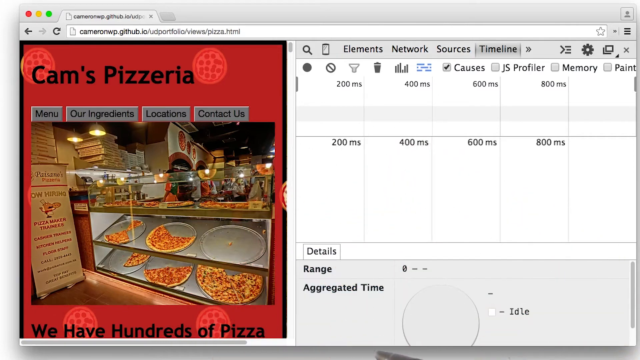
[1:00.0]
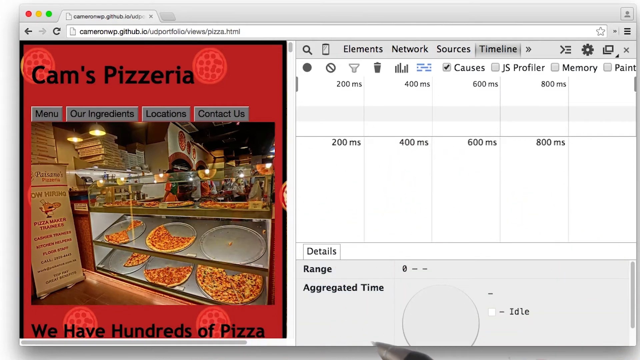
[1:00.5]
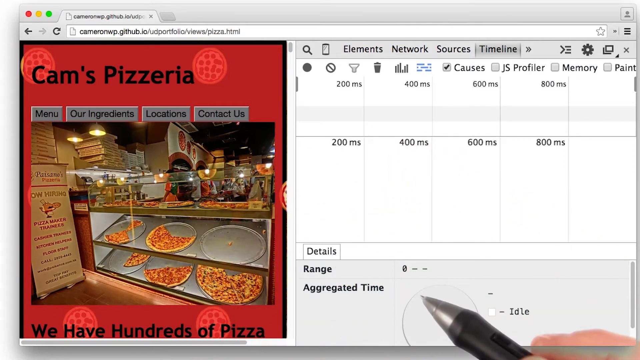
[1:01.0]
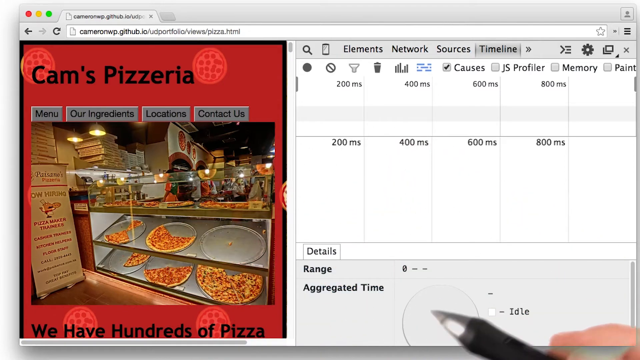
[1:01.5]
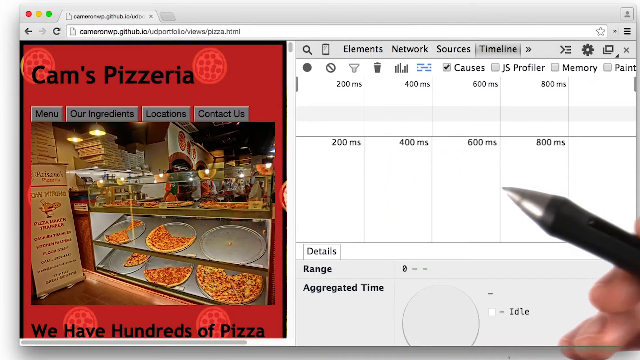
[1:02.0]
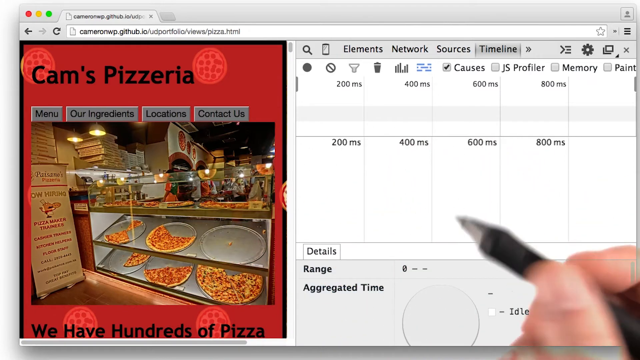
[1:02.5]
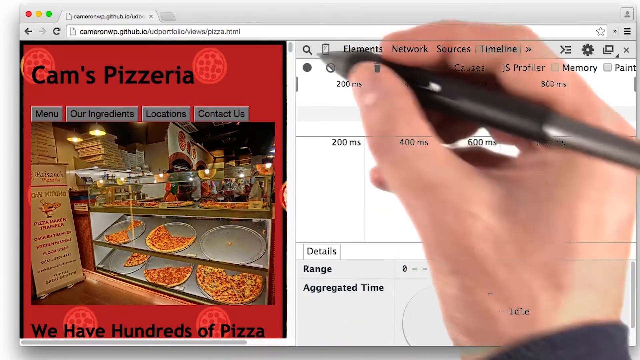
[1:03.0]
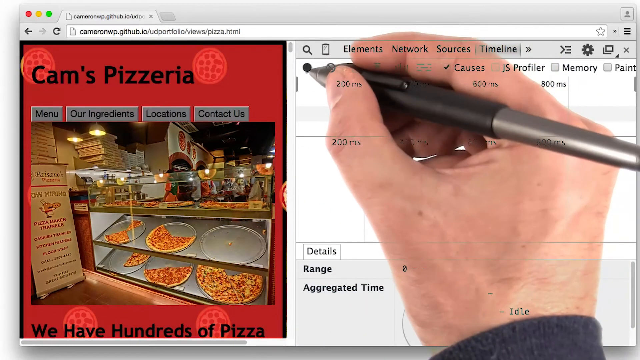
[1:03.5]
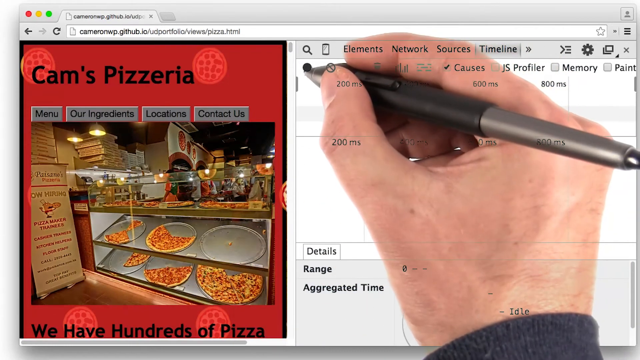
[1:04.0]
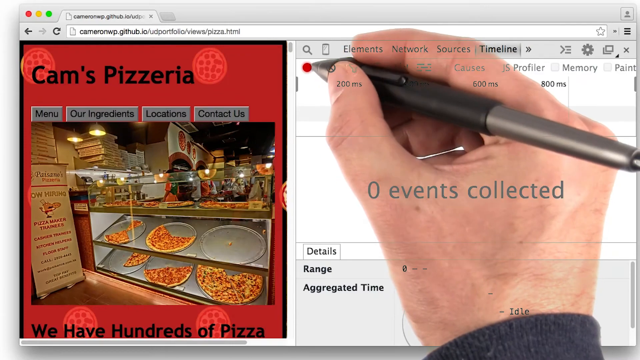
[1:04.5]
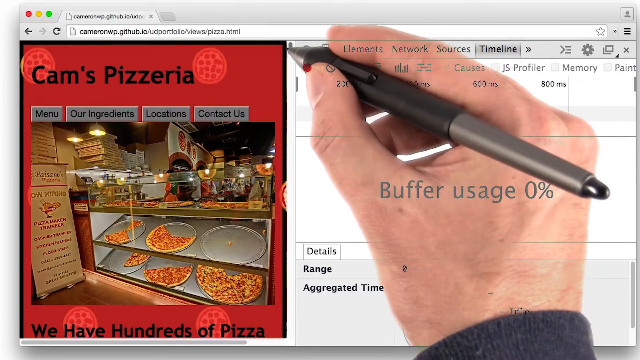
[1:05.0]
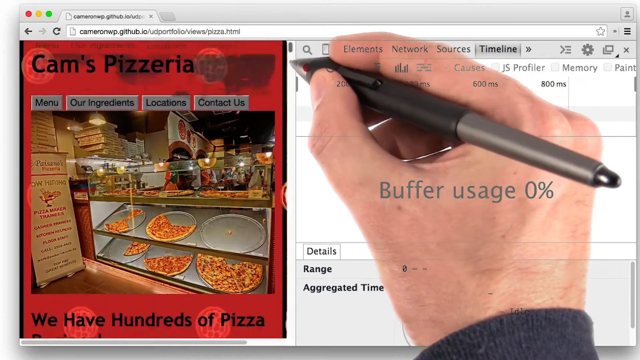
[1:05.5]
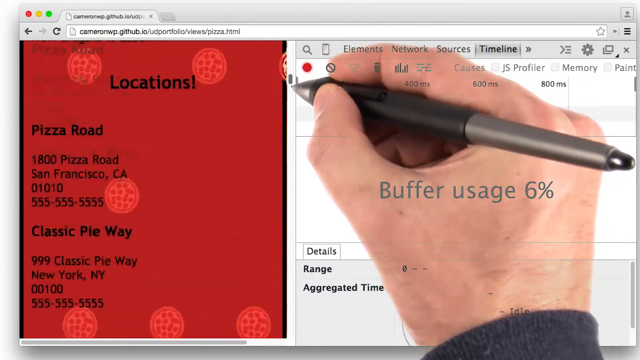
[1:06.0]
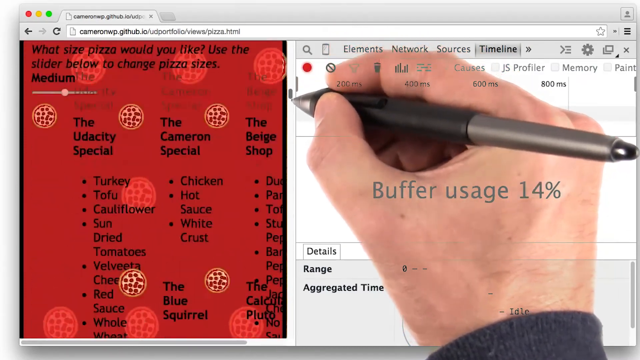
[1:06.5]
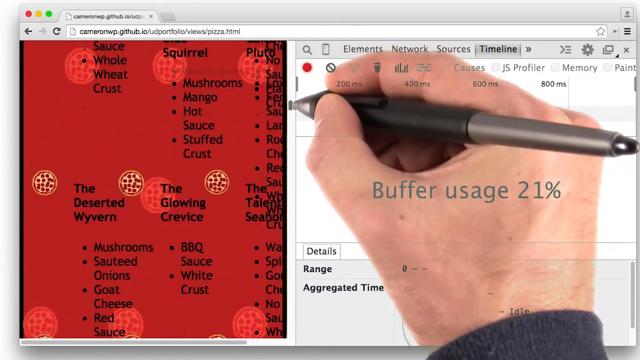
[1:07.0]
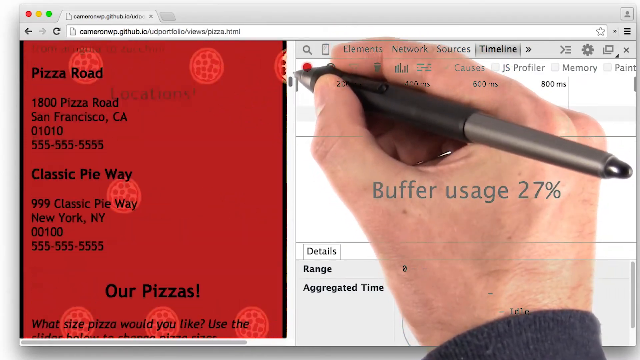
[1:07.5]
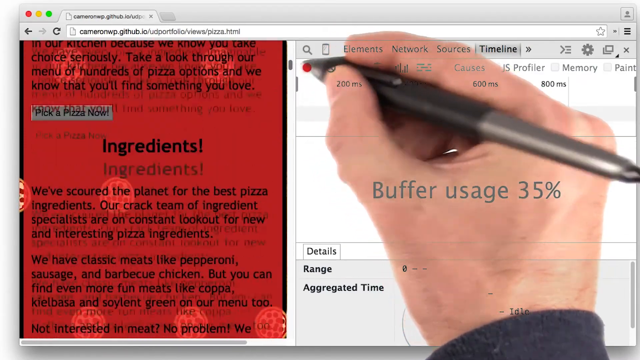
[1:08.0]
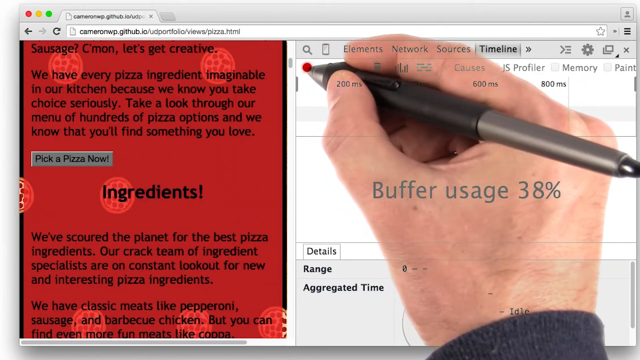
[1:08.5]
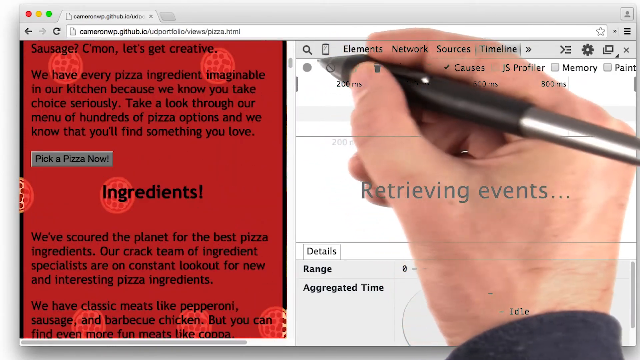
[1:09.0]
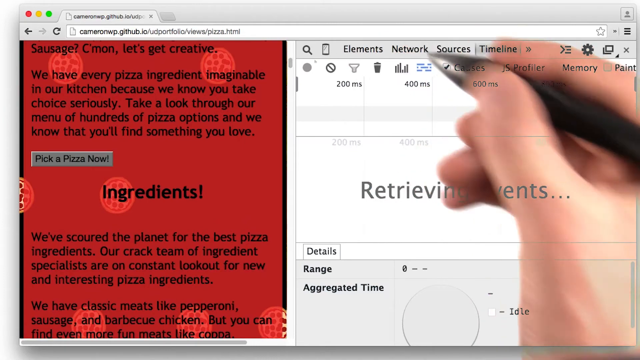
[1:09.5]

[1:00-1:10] The presenter is in the debugger and clicks the record button, possibly at the top left of the debugger. He then scrolls down the pizza website, and the buffer usage is displayed, starting at around 0 and rising to 30%. As the page scrolls down, it shows the different pizzas available and the ingredients used in them. He scrolls up and down the website.